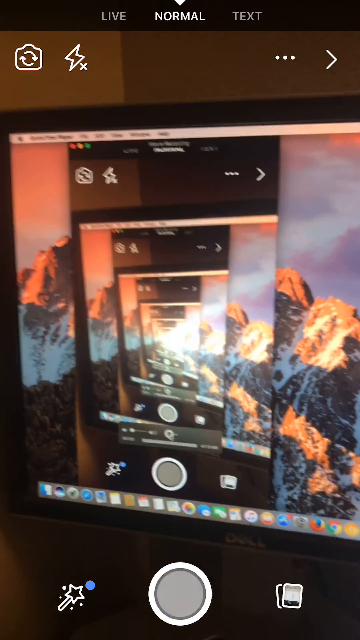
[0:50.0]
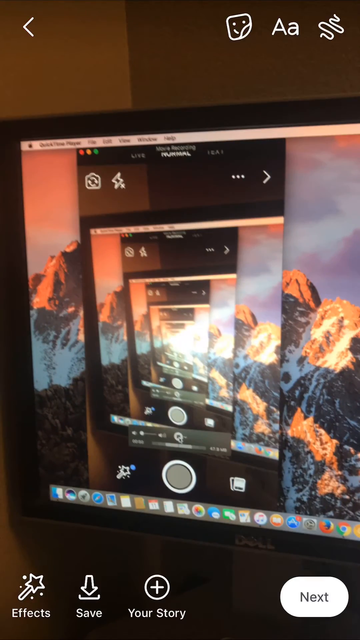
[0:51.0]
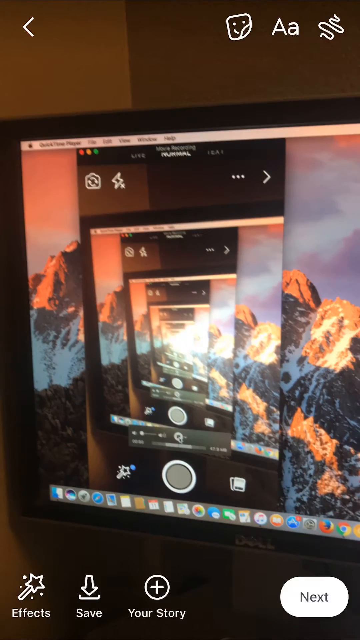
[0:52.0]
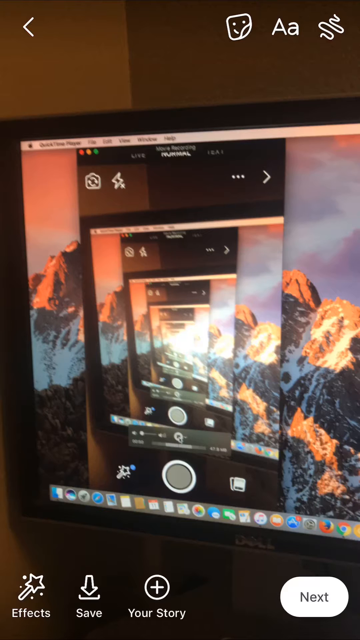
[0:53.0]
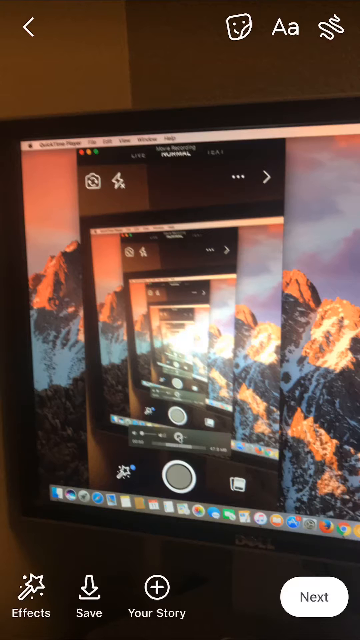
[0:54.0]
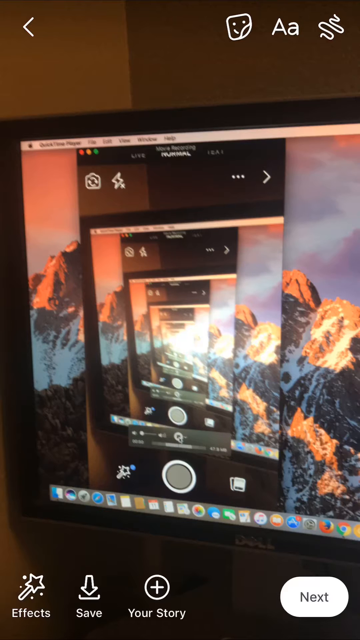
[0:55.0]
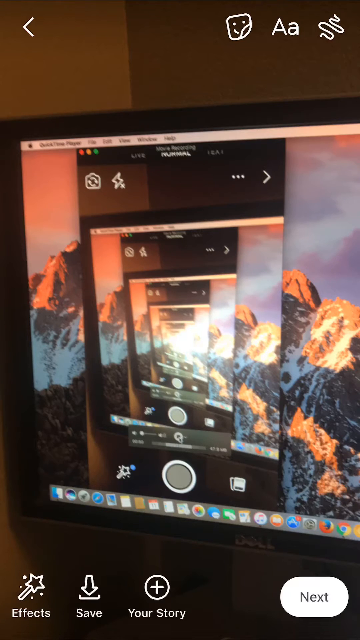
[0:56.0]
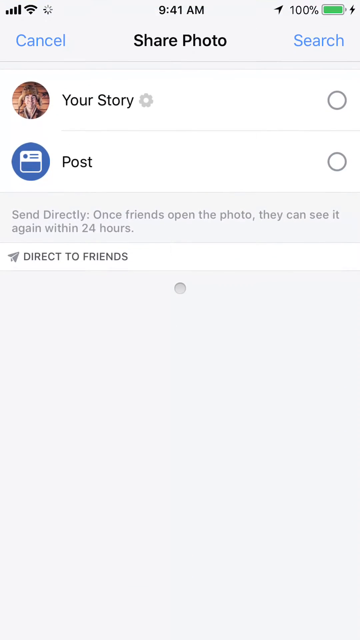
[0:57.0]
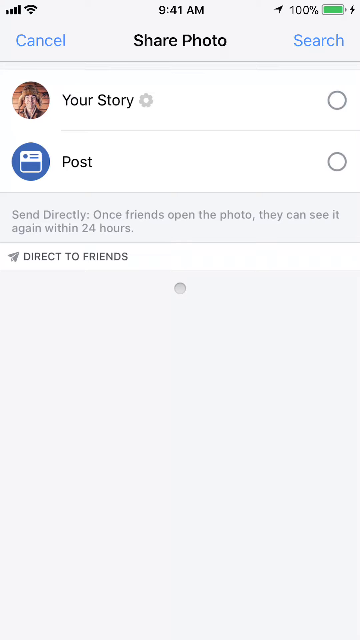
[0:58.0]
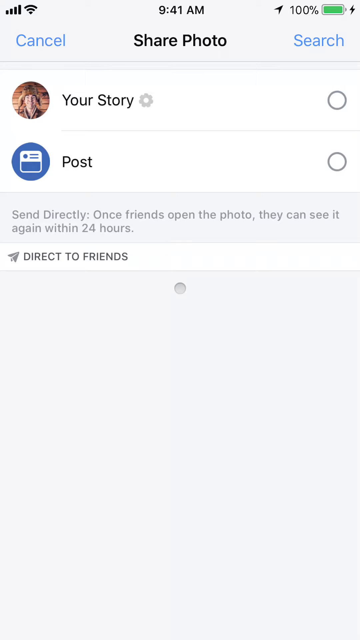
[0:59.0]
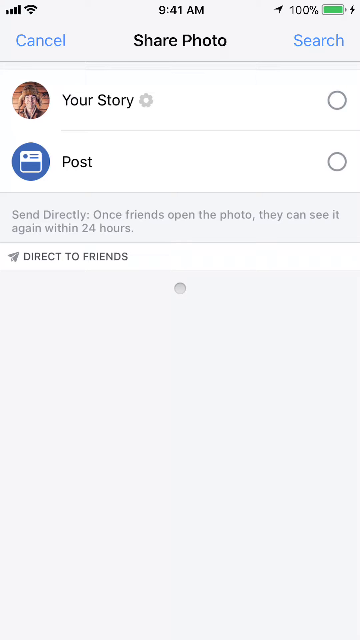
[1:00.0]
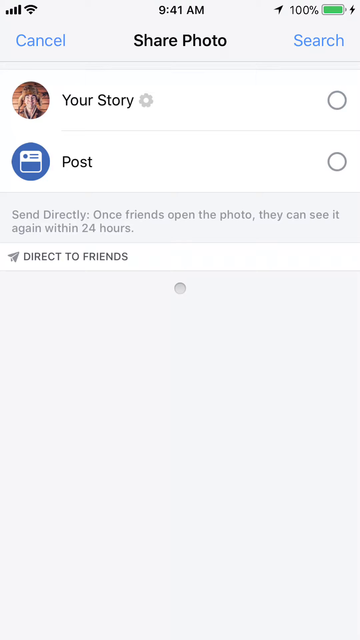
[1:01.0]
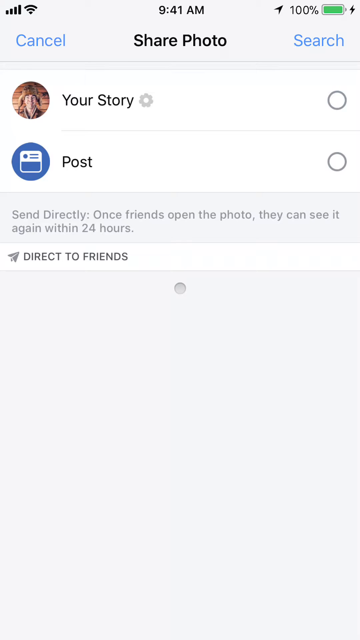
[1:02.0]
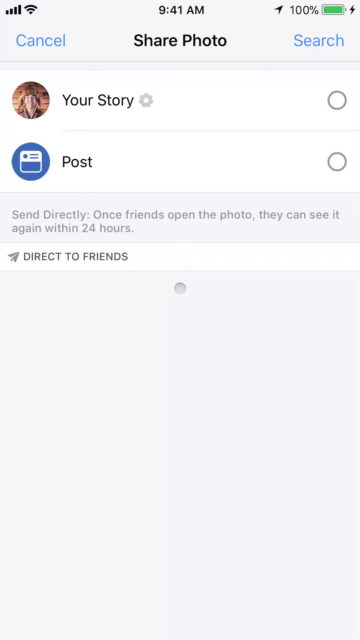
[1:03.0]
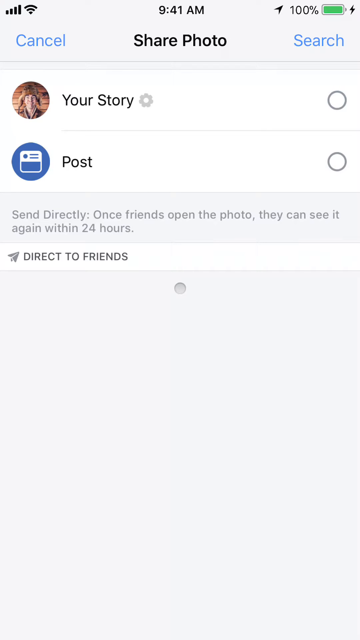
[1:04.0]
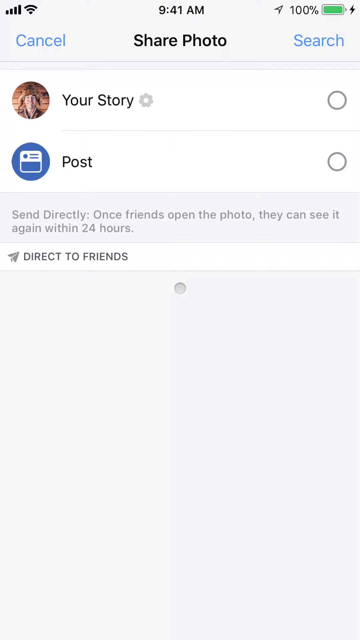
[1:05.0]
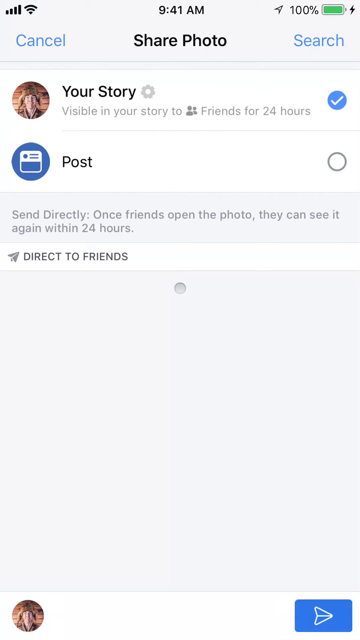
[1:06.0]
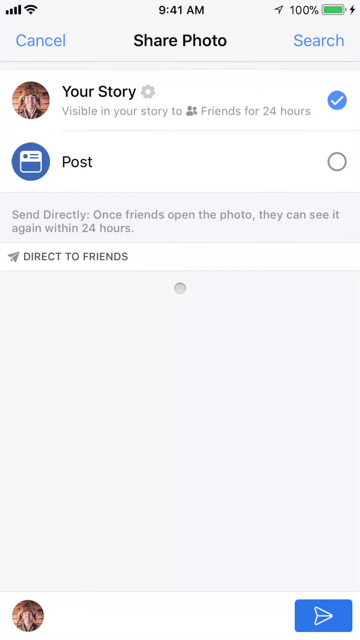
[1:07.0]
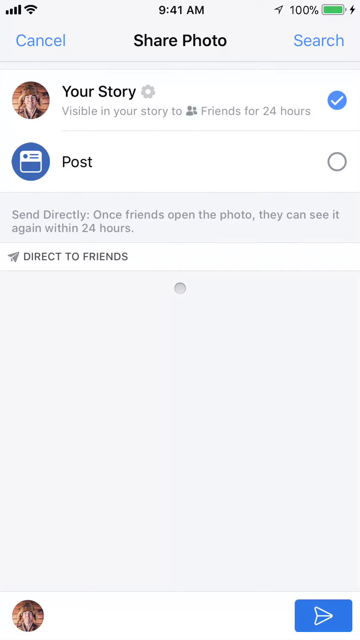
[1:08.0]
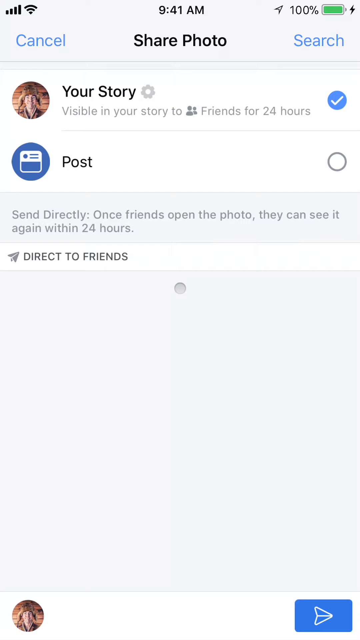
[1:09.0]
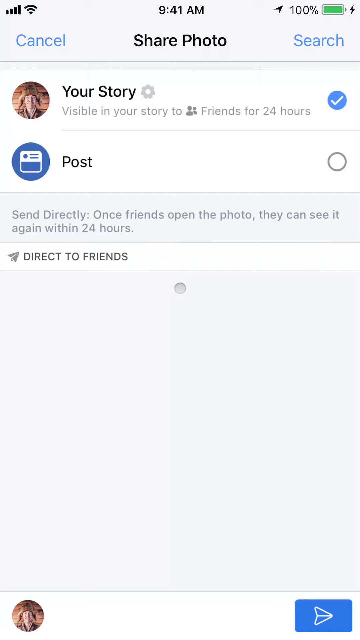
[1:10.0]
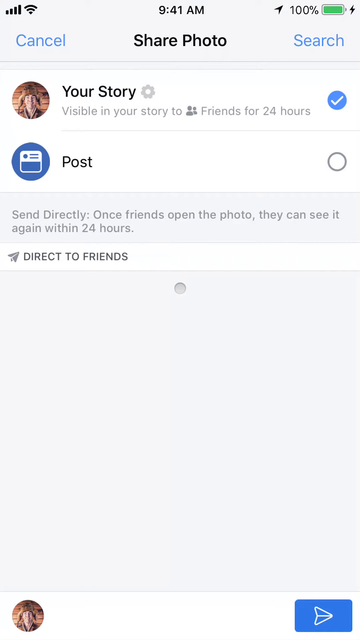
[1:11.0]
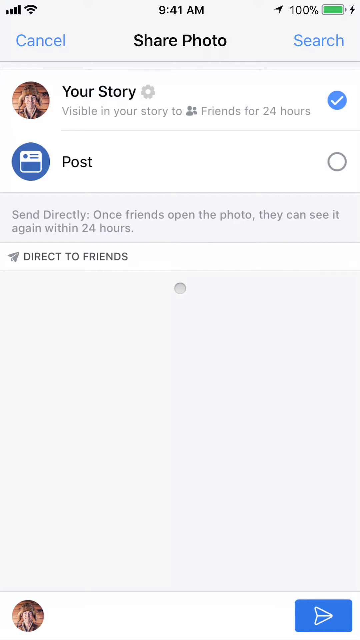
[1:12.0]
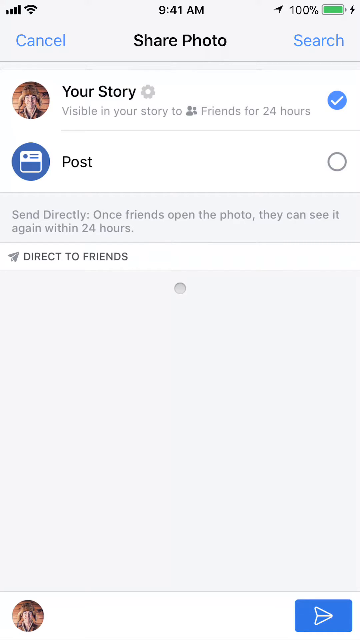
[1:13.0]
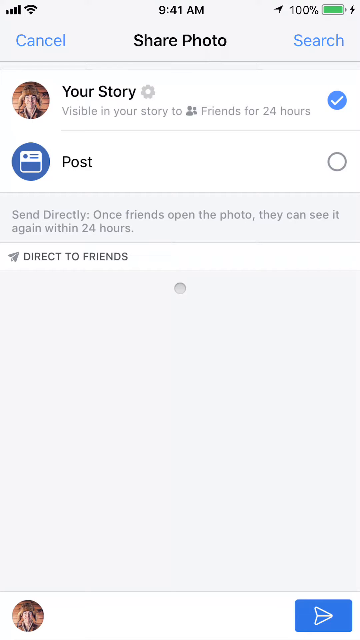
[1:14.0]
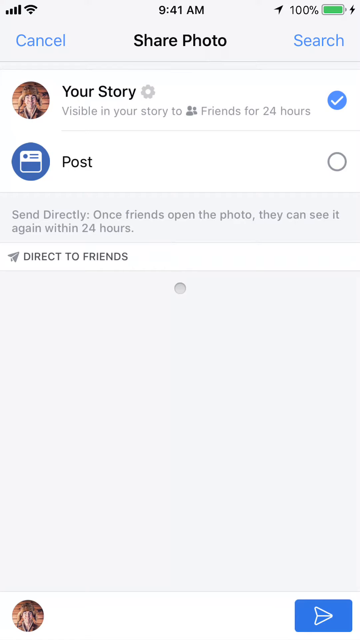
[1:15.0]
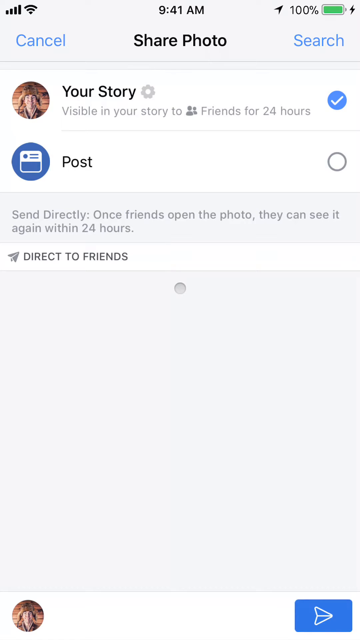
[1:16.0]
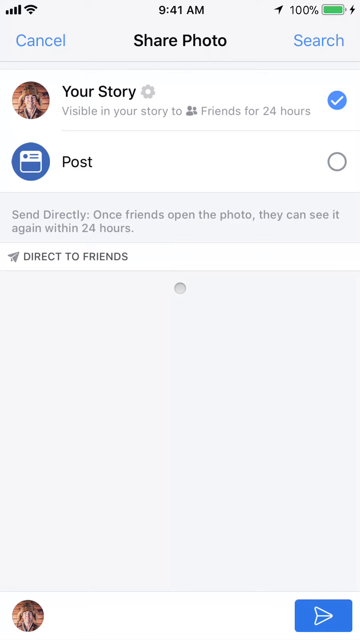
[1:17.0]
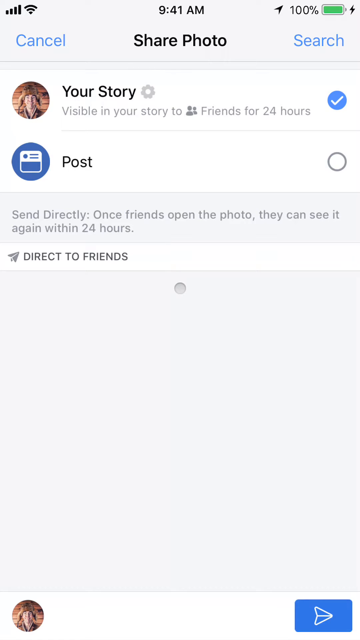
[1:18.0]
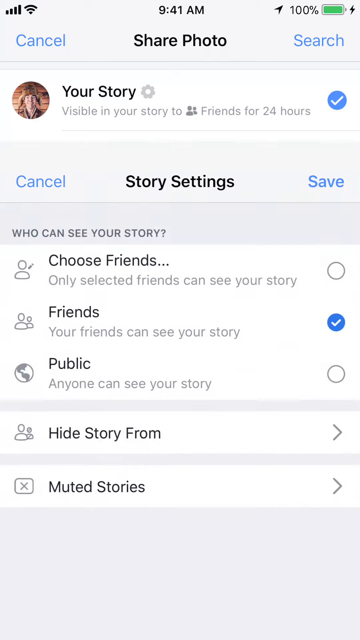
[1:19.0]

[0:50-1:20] A photo on the computer display, which appears to be some sort of volcano, is being added to the user's stories. At the very top it says "live", "normal" and "text". The time at the top is 9:41 AM, the battery in the upper right corner is at 100%, and the signal strength bars and Wi-Fi icon are in the upper left corner. Beneath the Wi-Fi icon is the word "Cancel", with "Share Photo" in the middle and "Search" on the right. The screen shows "Your Story", and underneath it says "send directly", along with text saying that once friends open the photo they can see it again within 24 hours.